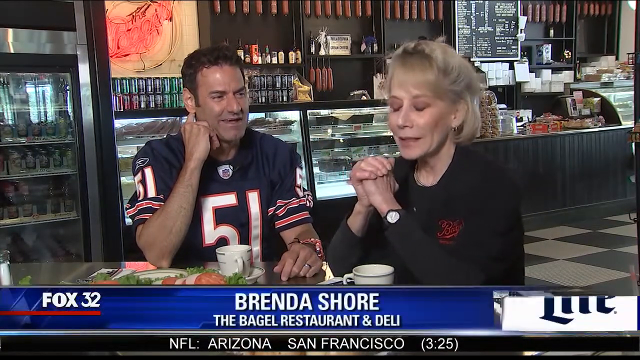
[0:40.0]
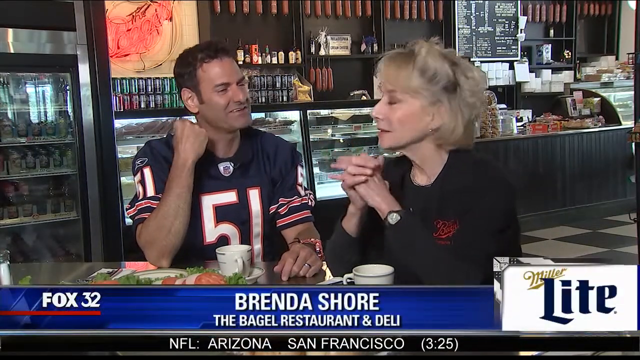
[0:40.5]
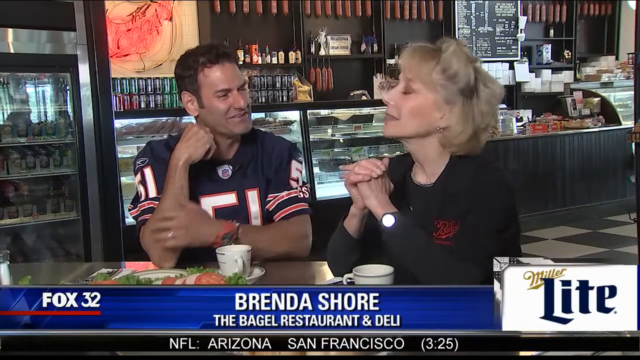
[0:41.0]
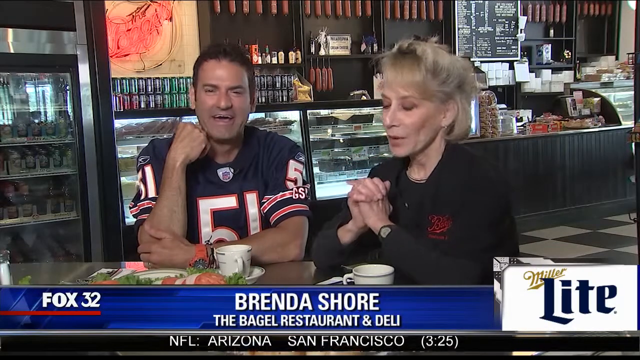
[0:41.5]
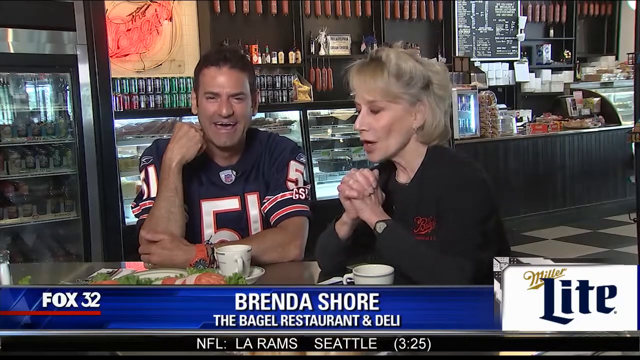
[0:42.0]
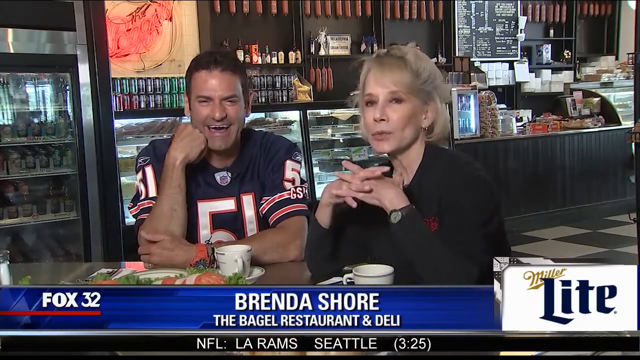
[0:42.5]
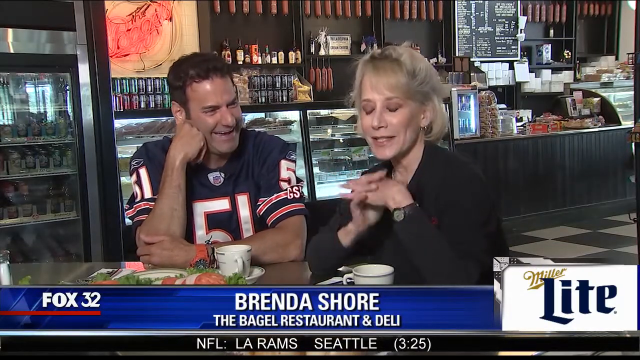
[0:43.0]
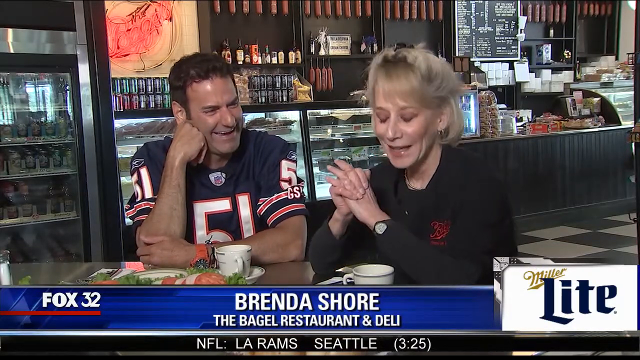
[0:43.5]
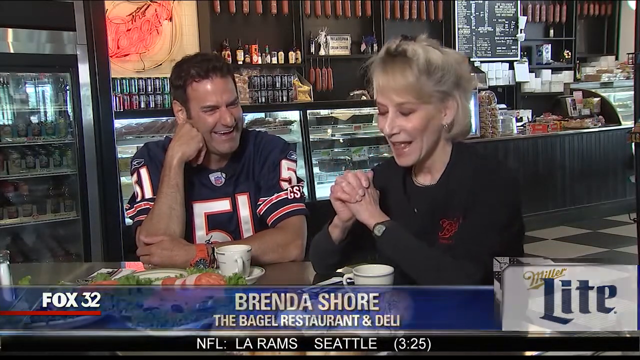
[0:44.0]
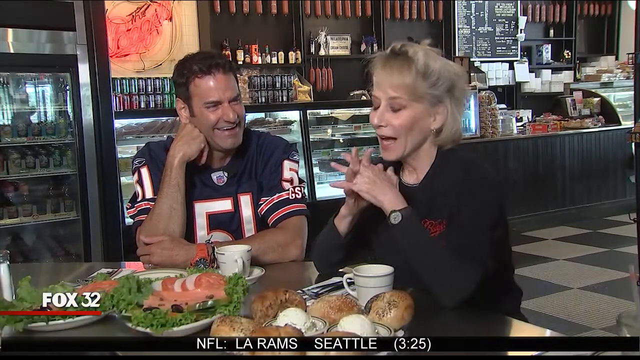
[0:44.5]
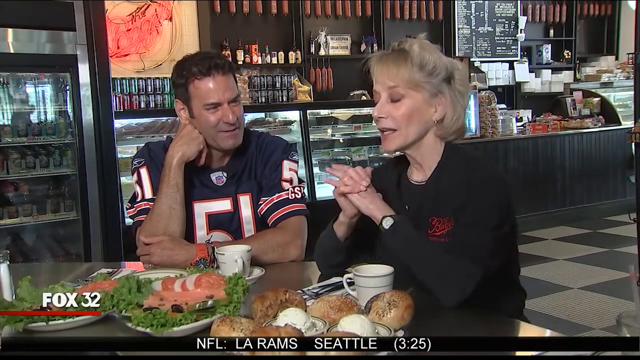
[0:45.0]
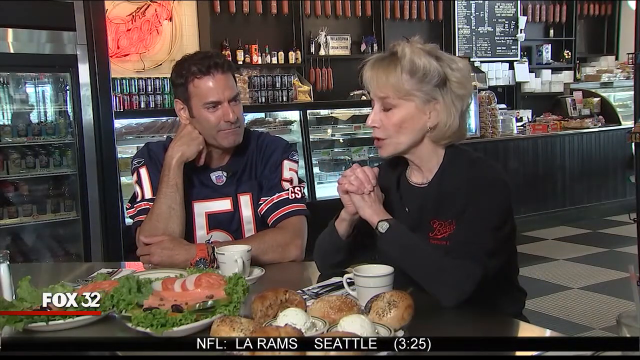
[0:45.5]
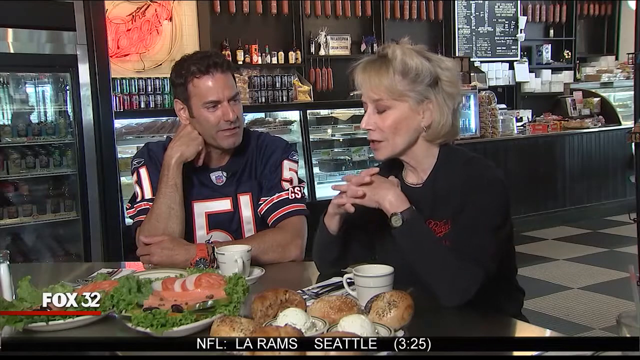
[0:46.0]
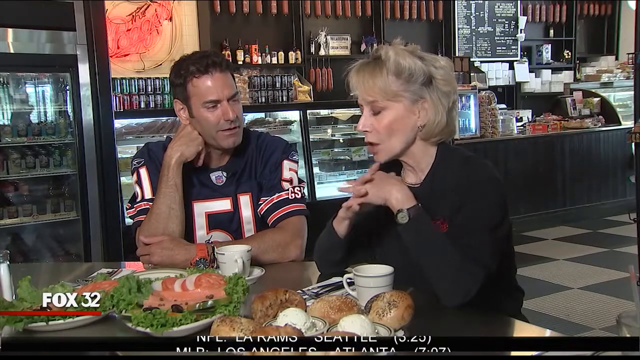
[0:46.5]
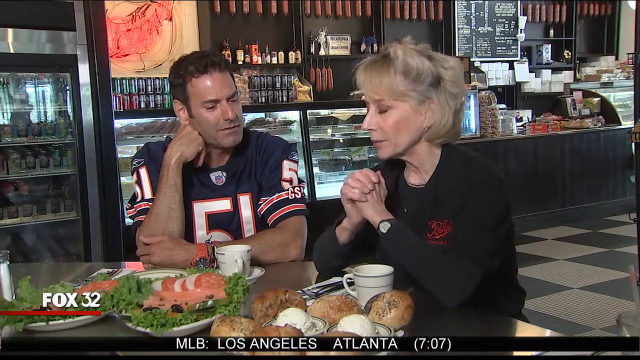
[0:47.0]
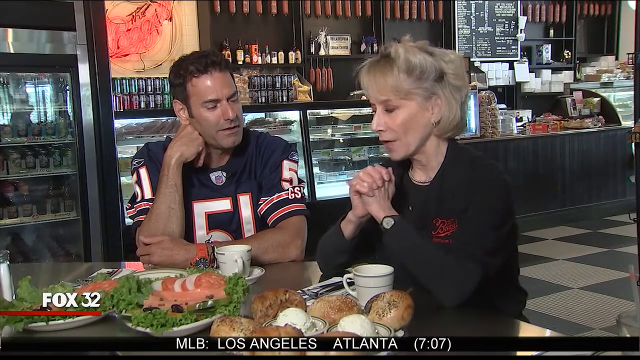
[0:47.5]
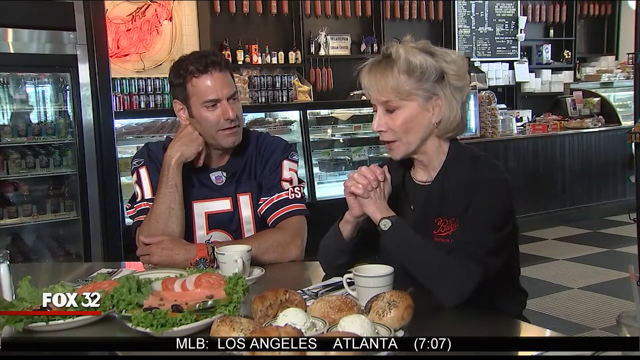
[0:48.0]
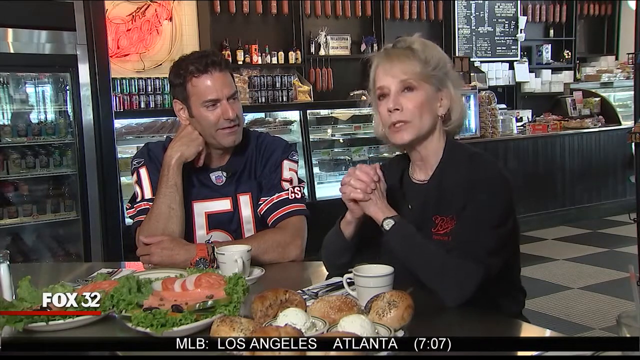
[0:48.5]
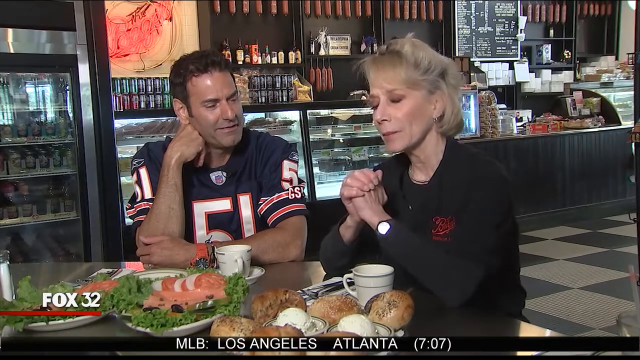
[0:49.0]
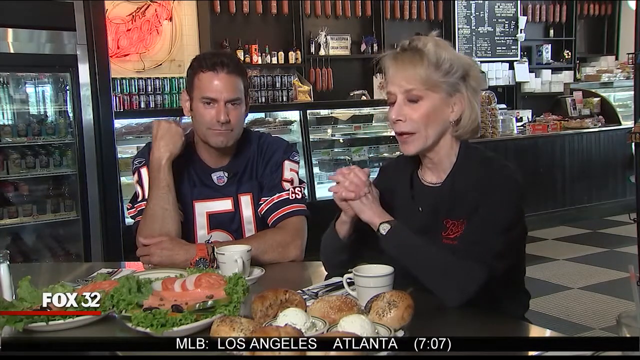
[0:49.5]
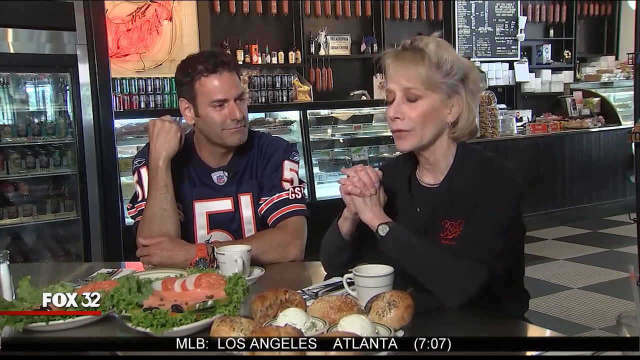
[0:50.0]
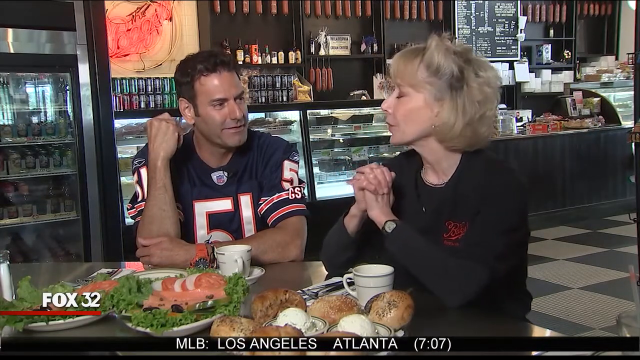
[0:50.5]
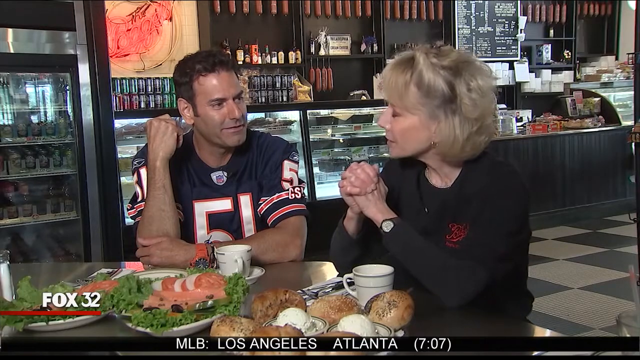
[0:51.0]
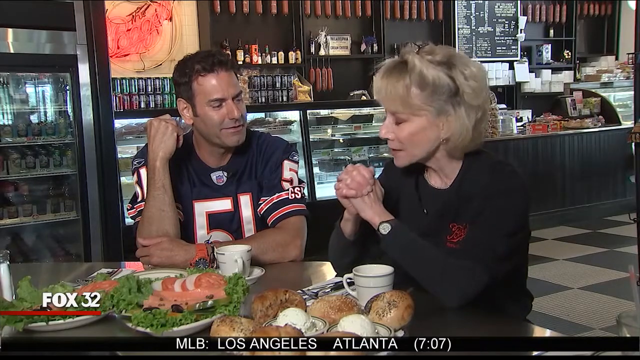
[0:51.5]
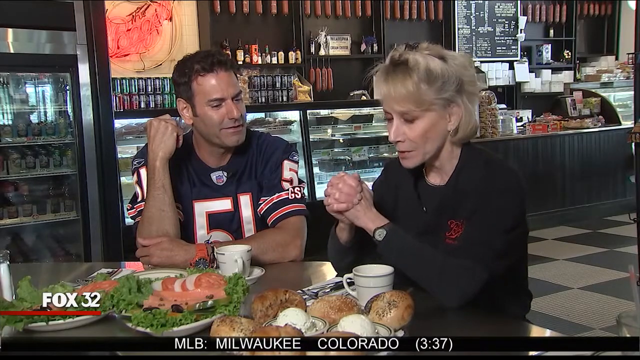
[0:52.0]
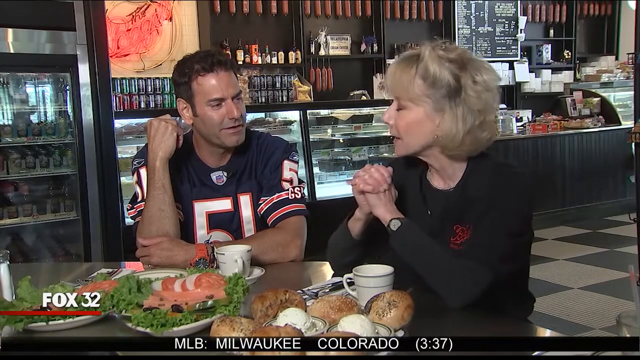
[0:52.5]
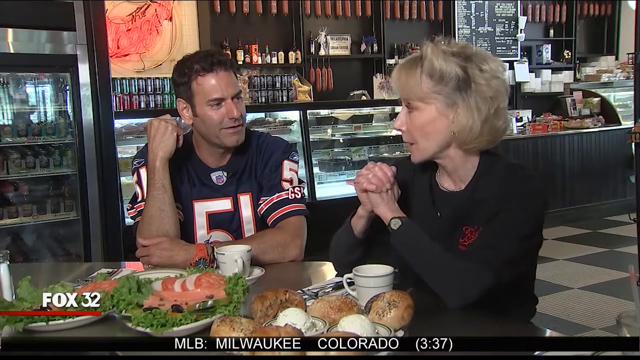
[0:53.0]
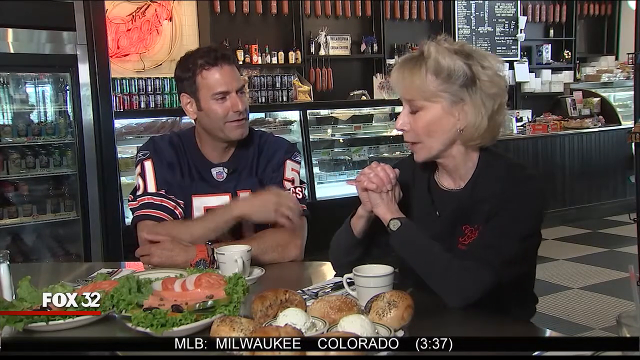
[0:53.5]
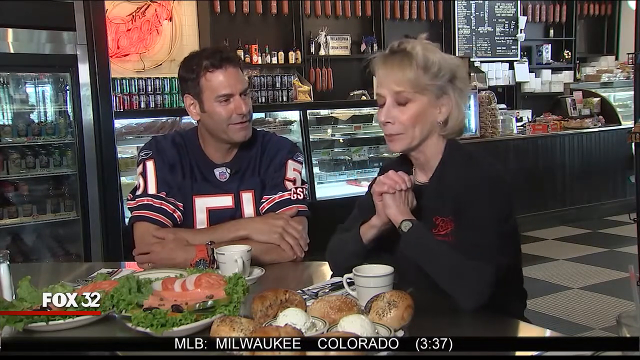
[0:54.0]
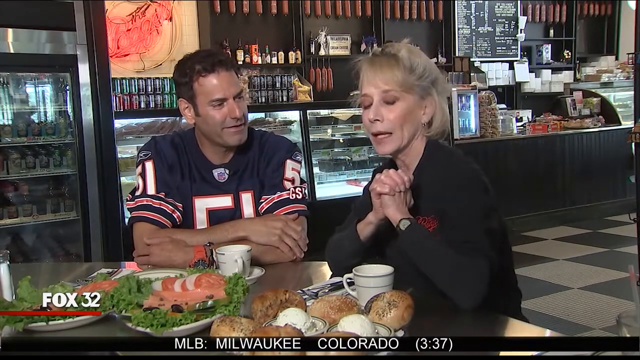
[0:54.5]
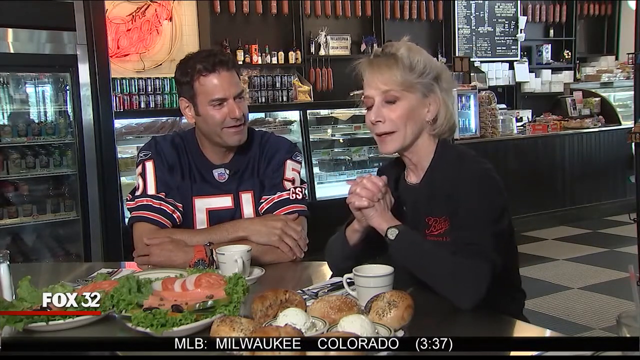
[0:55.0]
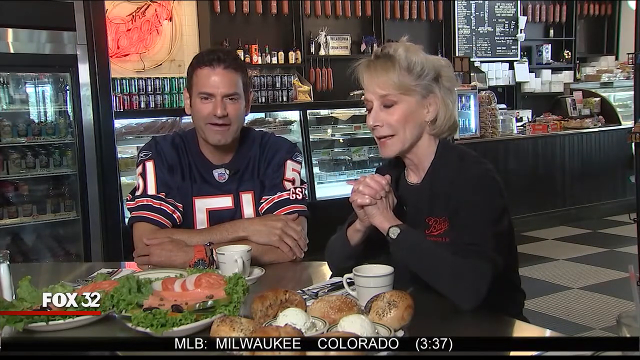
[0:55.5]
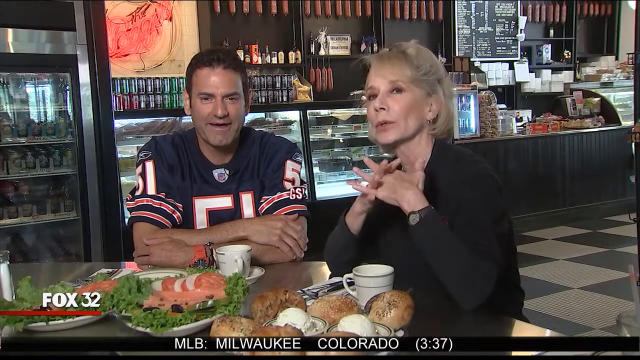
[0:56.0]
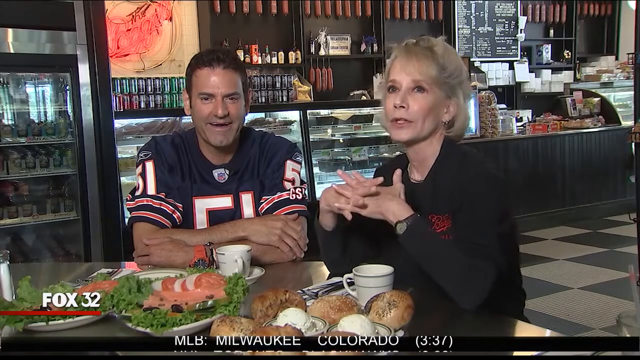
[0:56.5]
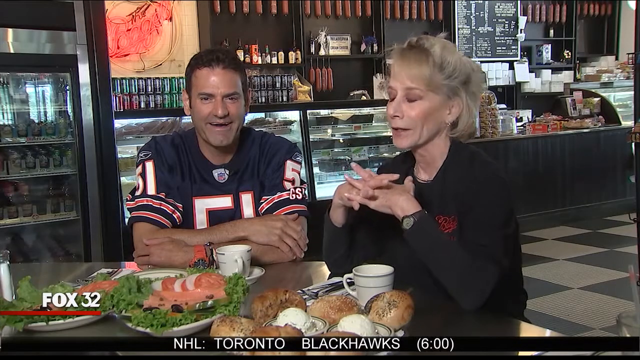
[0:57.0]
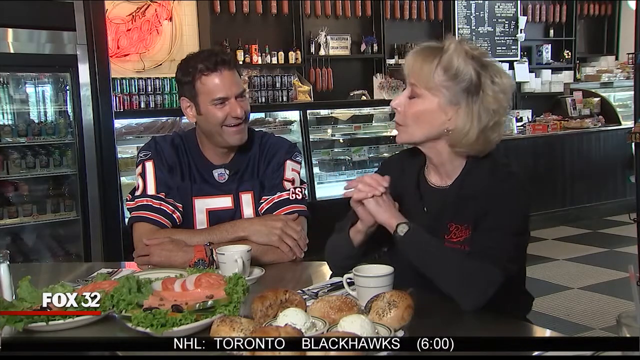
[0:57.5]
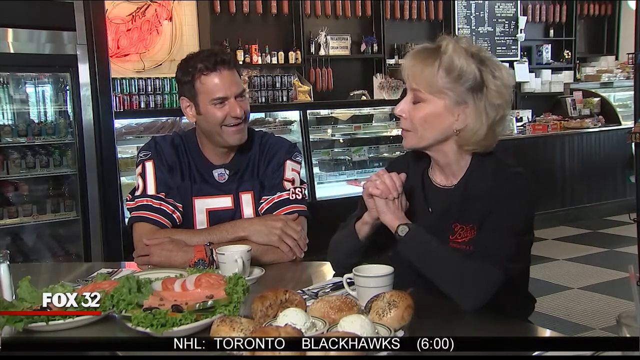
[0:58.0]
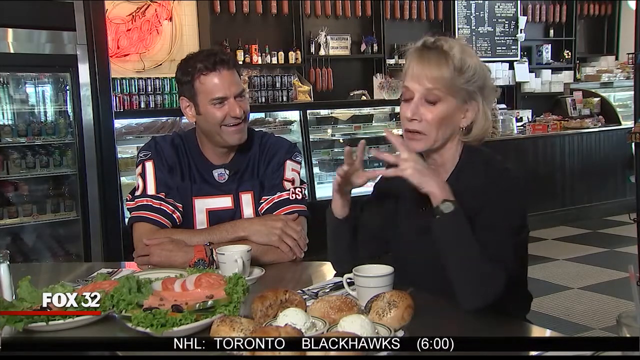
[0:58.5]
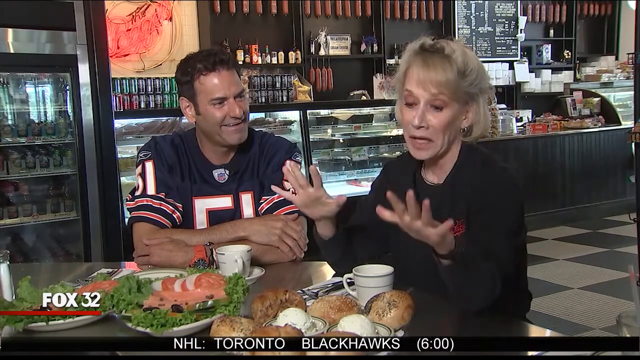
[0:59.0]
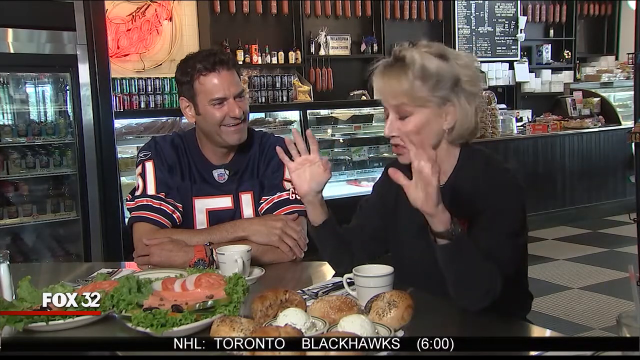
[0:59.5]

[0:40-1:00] The thumbnail shows a lady with blonde hair, a black top and a black watch, and a man in a football jersey with the number 51, both sitting at a restaurant with mugs and food in front of them. Text at the bottom reads "Brenda Shore, the bagel restaurant and deli", presumably the place where they are. The channel is Fox 32. Results run along the bottom of the screen. The two talk; the lady talks using her hands while the man listens very attentively and laughs. They seem to be having a good time and a good talk. More results, of MLB and NHL games, appear at the bottom.